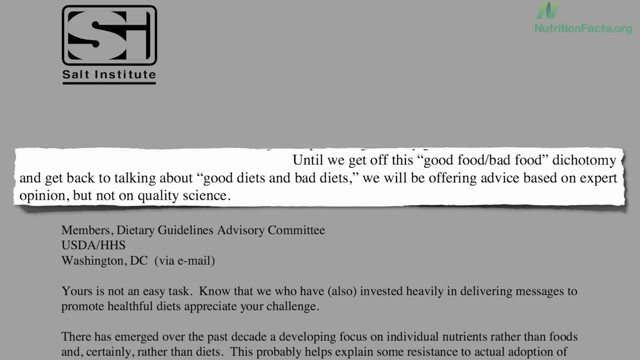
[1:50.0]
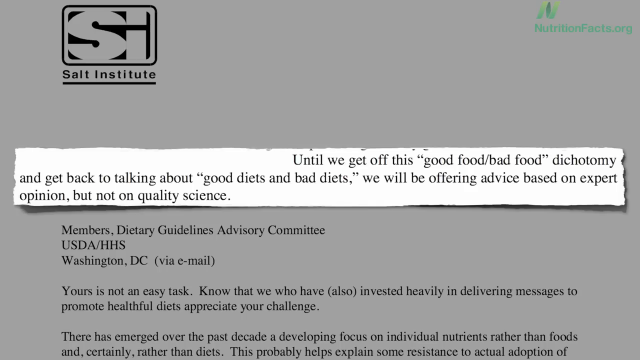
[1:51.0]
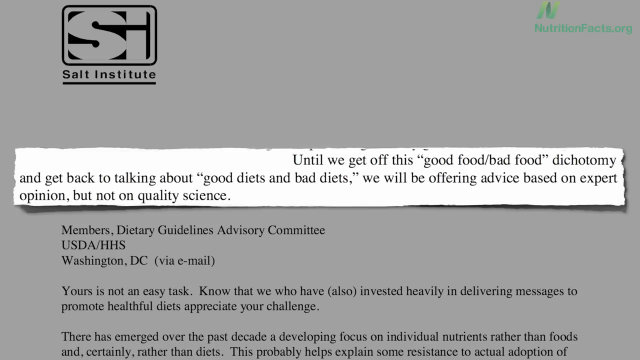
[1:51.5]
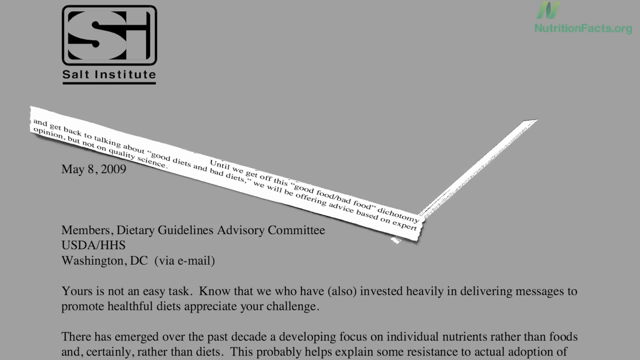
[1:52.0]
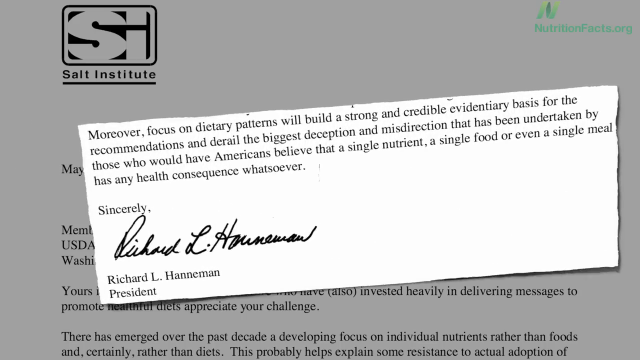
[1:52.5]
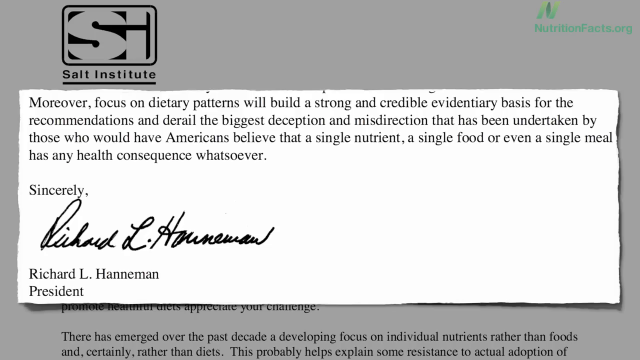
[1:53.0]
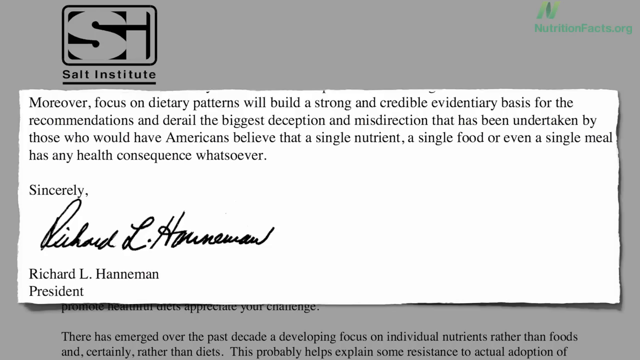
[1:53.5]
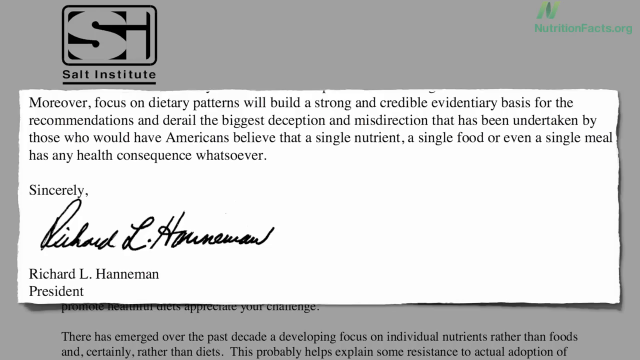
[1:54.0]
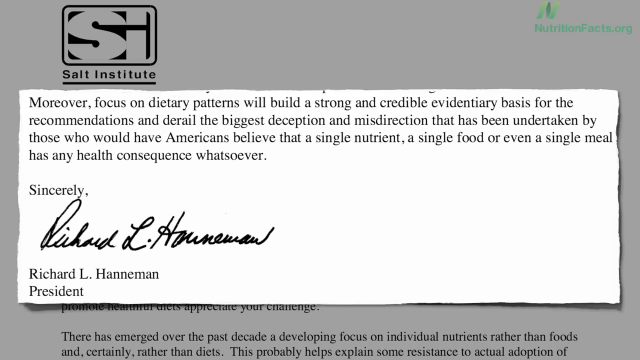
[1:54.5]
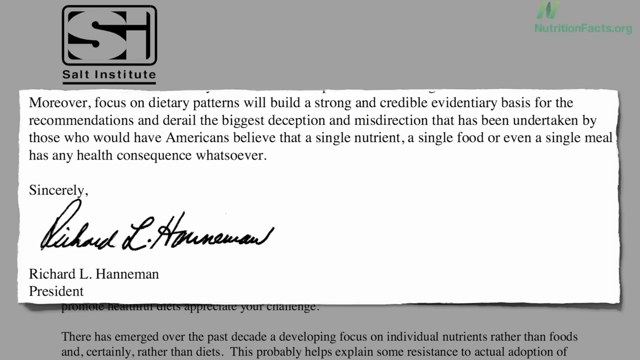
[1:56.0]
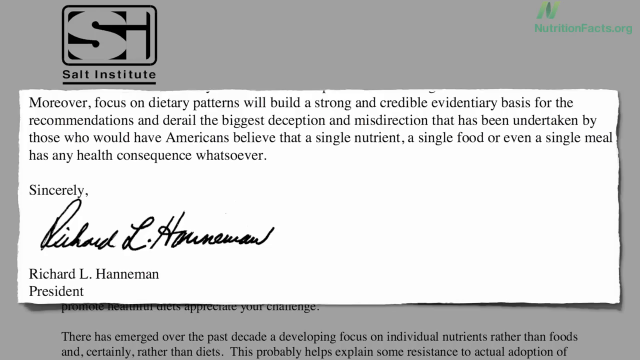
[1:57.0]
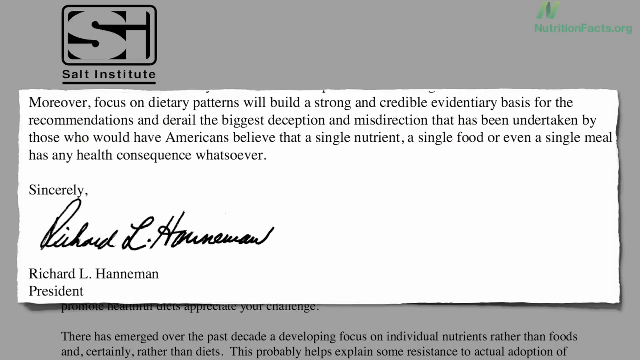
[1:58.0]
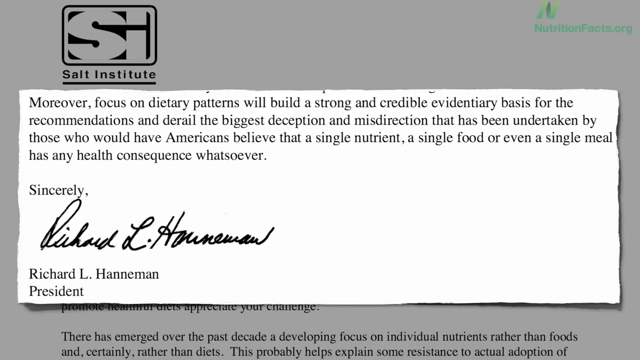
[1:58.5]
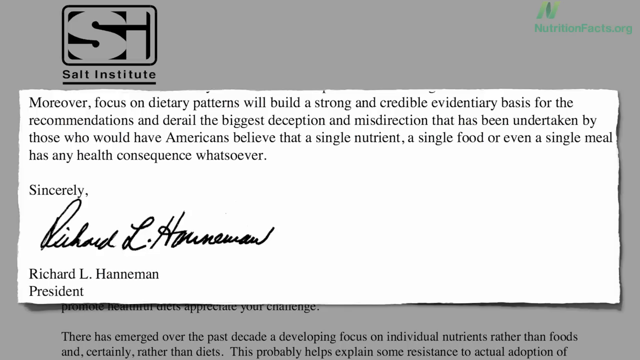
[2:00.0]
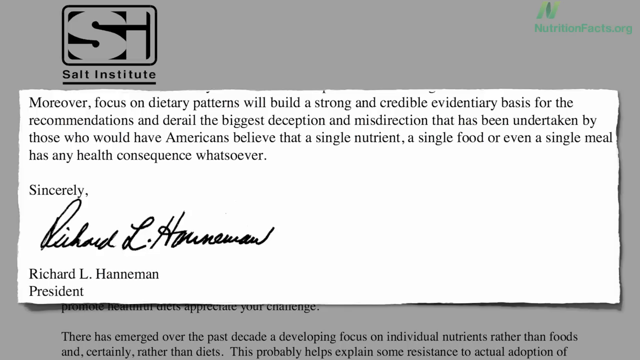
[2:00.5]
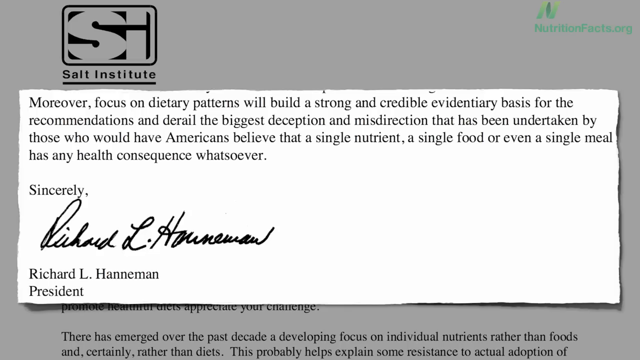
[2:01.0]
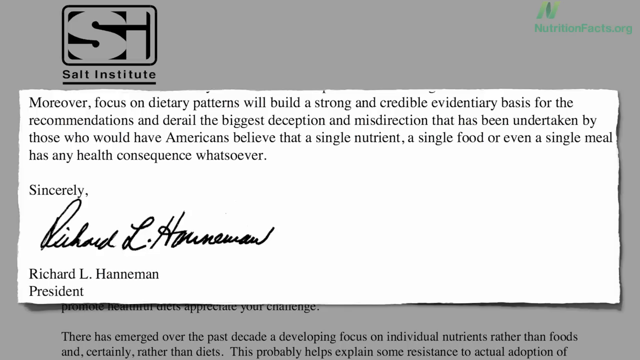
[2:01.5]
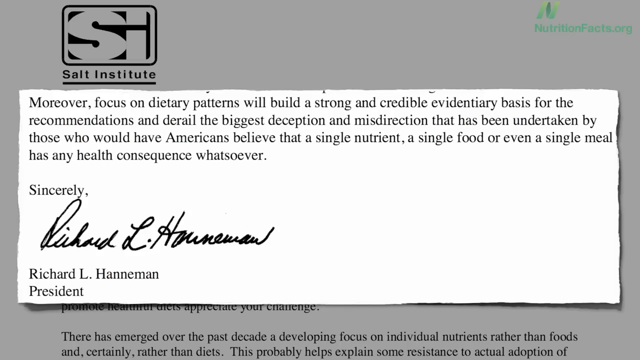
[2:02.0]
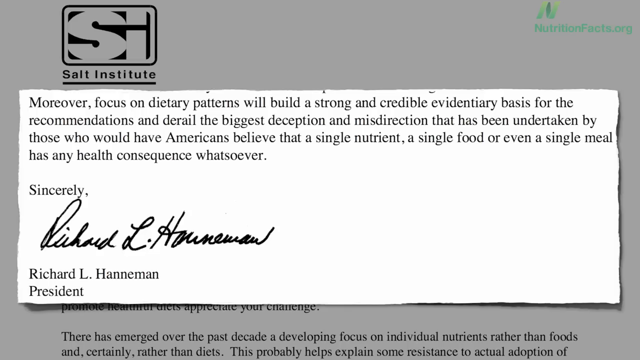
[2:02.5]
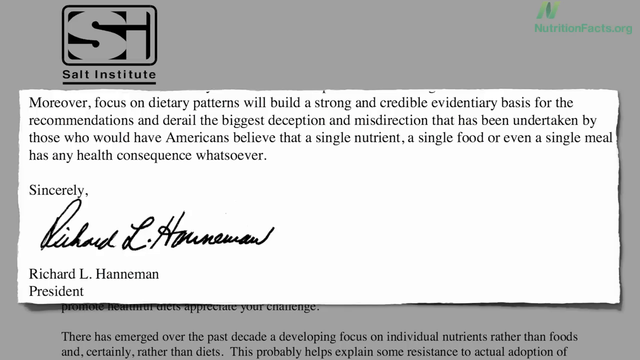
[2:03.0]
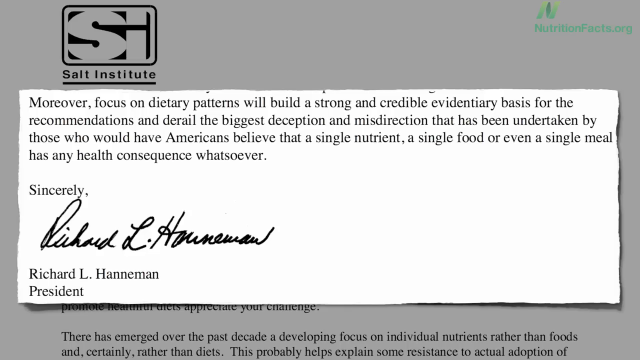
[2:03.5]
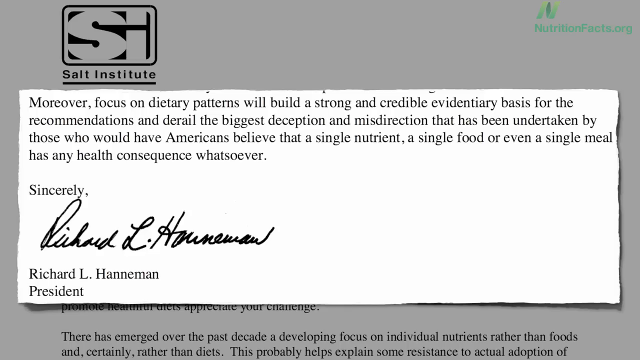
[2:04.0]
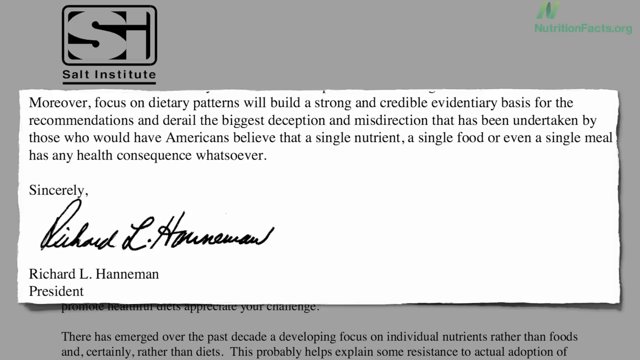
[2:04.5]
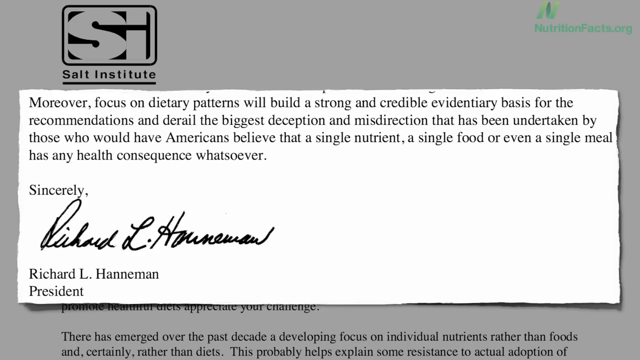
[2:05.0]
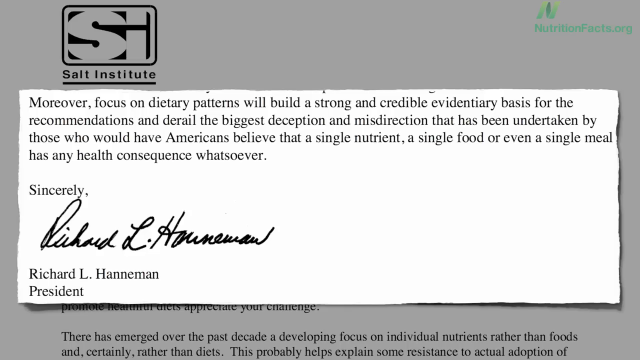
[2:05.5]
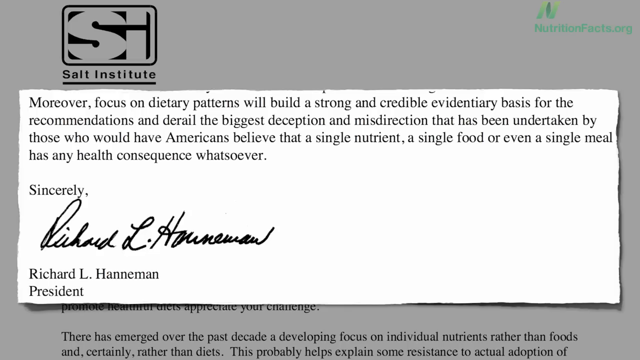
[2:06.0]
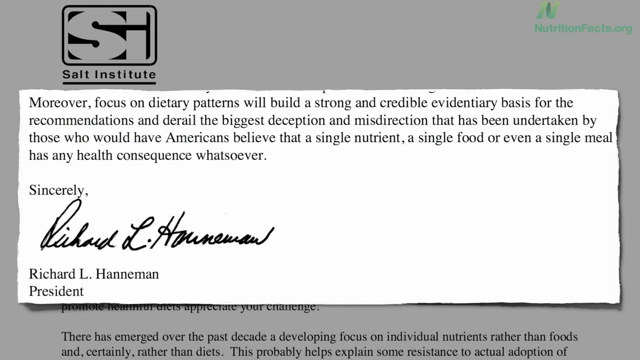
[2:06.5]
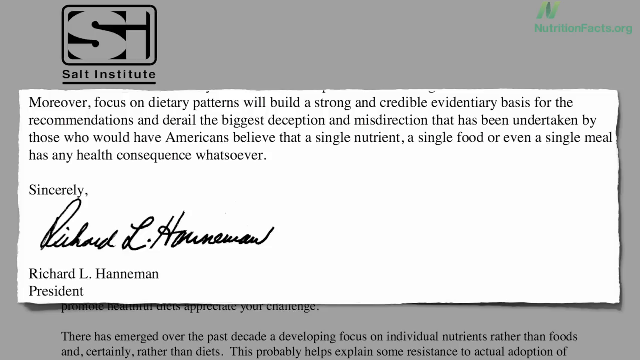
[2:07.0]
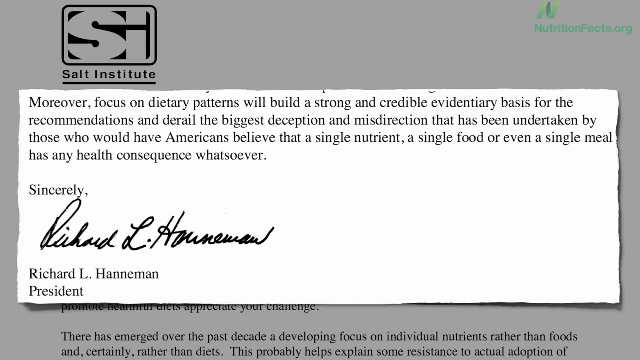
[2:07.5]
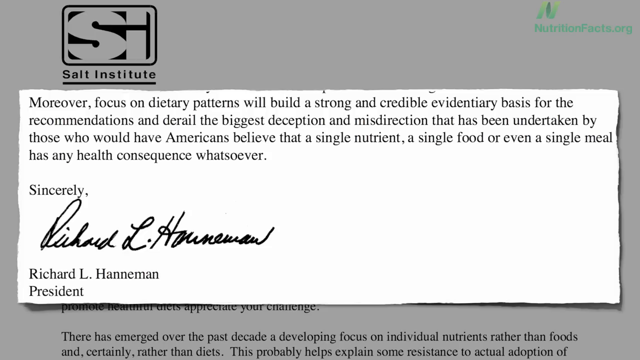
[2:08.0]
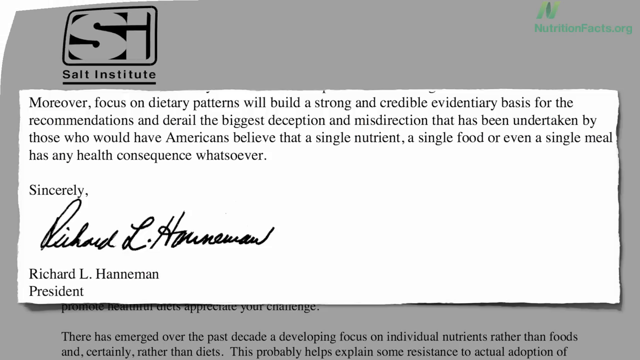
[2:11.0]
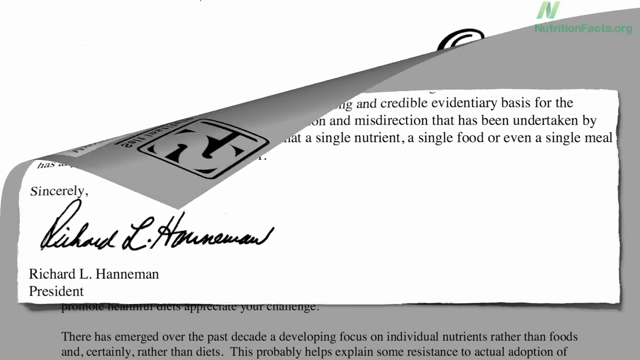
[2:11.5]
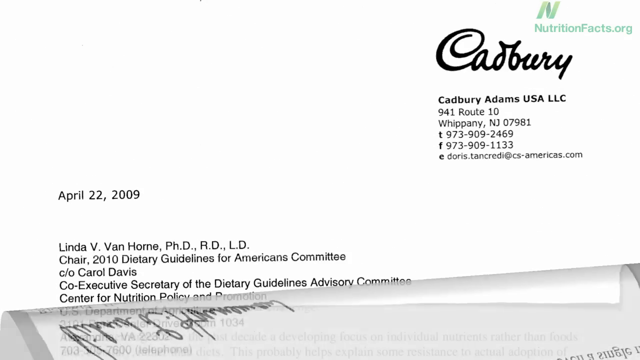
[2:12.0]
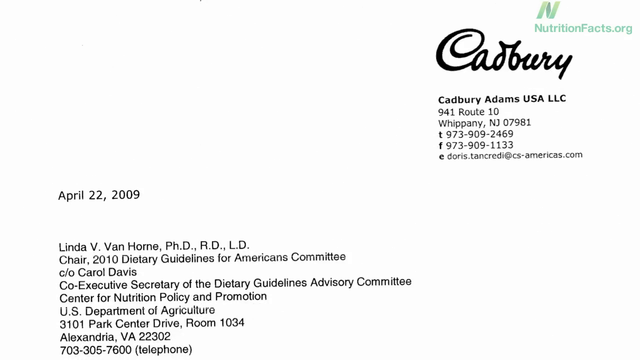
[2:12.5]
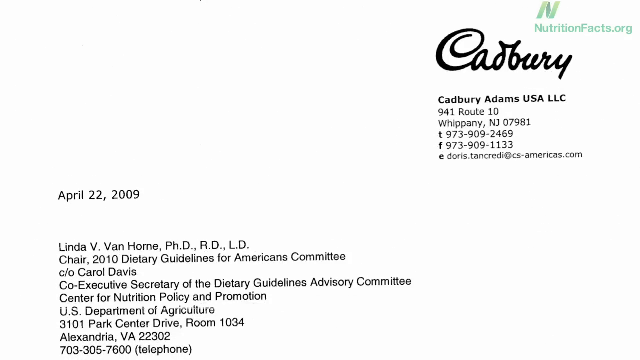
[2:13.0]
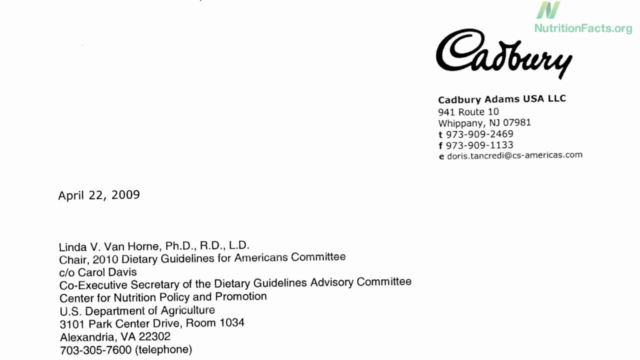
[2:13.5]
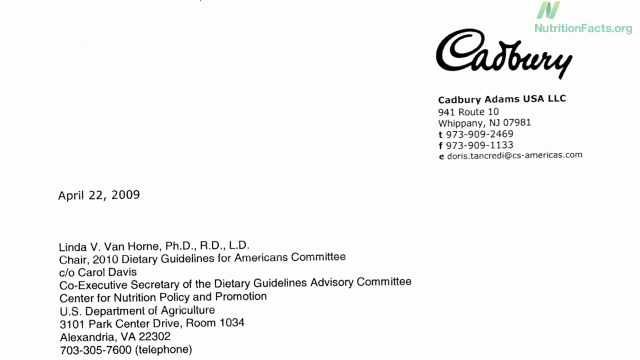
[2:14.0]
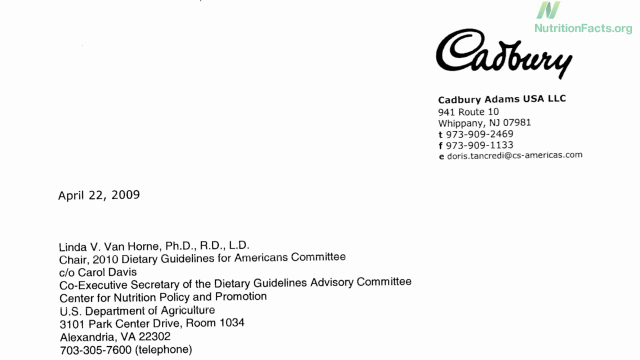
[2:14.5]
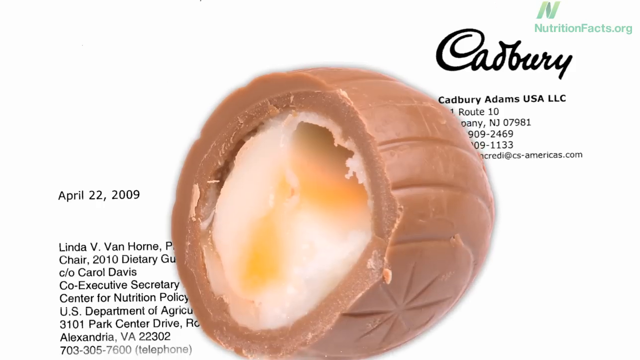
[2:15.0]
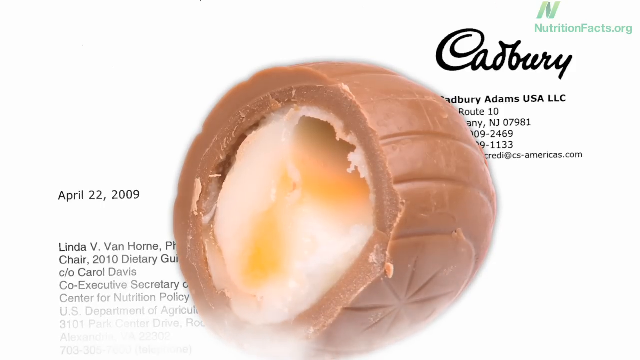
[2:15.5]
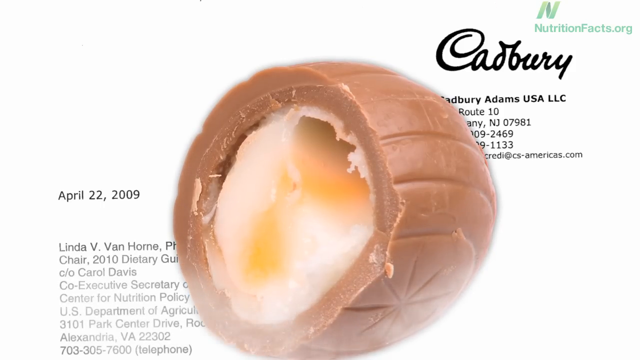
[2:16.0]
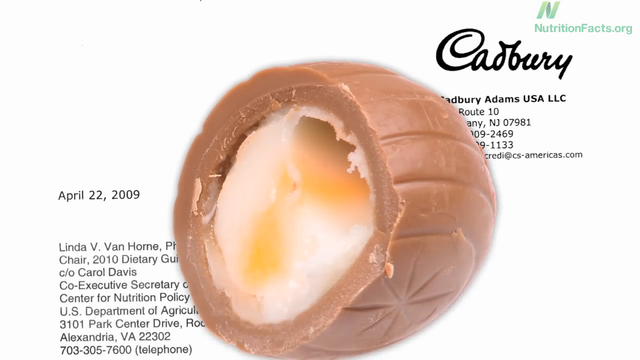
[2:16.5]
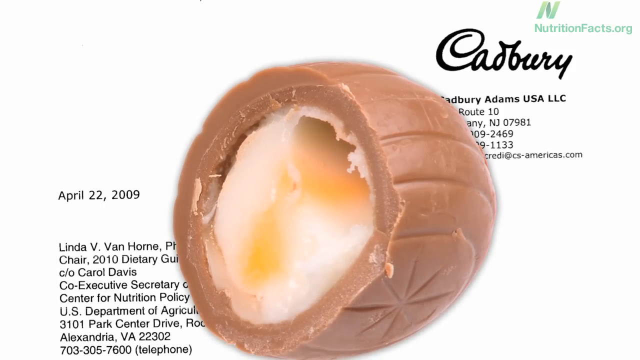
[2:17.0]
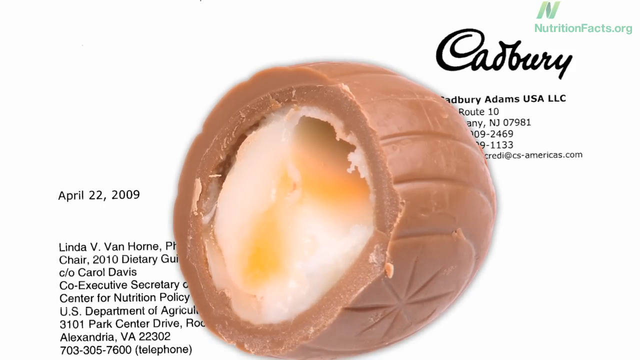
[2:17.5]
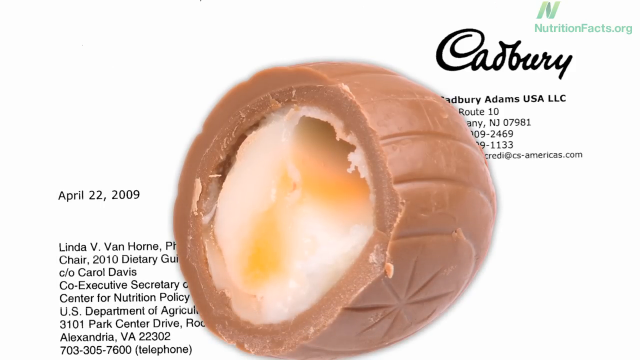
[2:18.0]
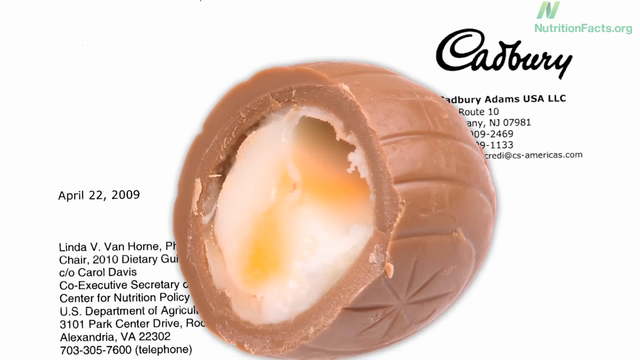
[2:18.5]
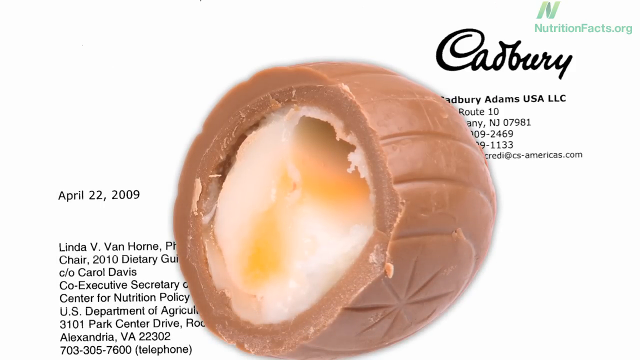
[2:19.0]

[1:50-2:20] A new page flips onto the screen: a larger, rectangular, ripped-out piece of paper reading "moreover, focus on dietary patterns will build a strong and credible evidentiary basis for the recommendations and derail the biggest deception and misdirection that has been undertaken by those who would have Americans believe that a single nutrient, a single food, or even a single meal has any health consequence whatsoever. Sincerely," followed by the signature of Richard L. Hanman, with his name in text underneath and "president". That page flips away to reveal a white background with the Cadbury logo at the top right, the text "Cadbury Adams USA LLC", an address and two phone numbers for Cadbury. Text on the image reads "April 22, 2009, Linda V. Van Holm, Ph.D., RD, LD, Chair, 2010 Dietary Guidelines for American Committee, CO Carol Davis, Co-Executive Secretary of the Dietitian Guideline Advisory Committee, Center for Nutrition Policy and Promotion, U.S. Department of Agriculture", followed by another address. A cutout image of a cut-open Cadbury cream egg then slams down onto the screen in a quick motion, with dust at the bottom of it as it lands, showing the spherical chocolate ball cut in half with a white, creamy filling inside.